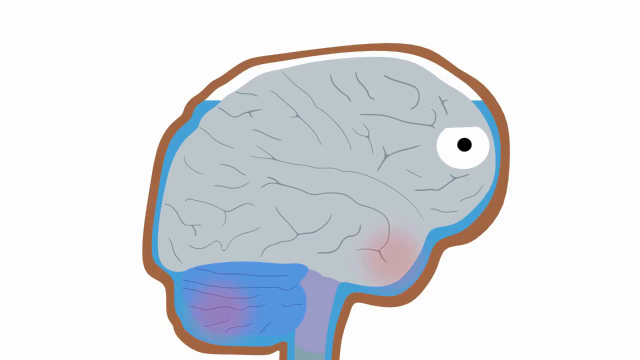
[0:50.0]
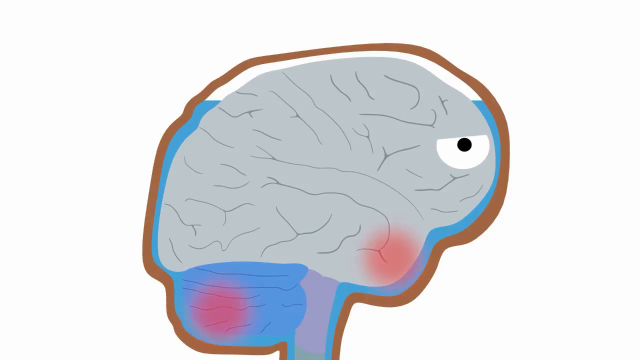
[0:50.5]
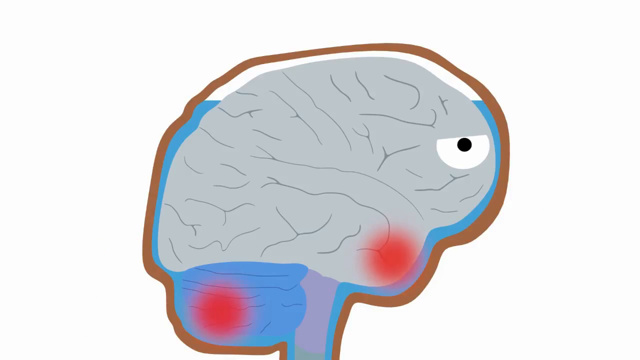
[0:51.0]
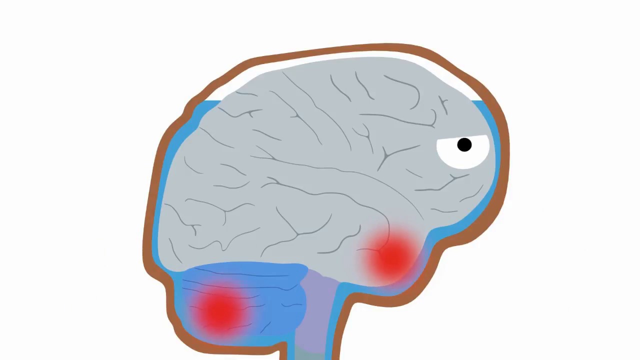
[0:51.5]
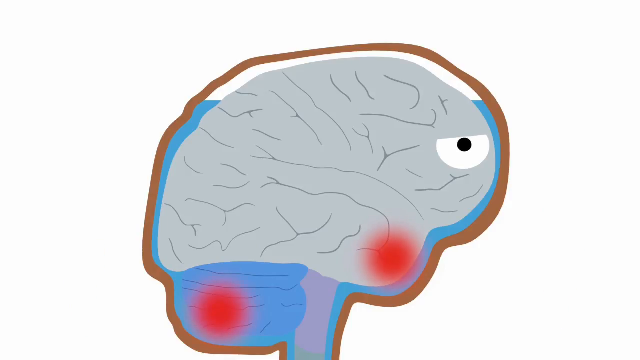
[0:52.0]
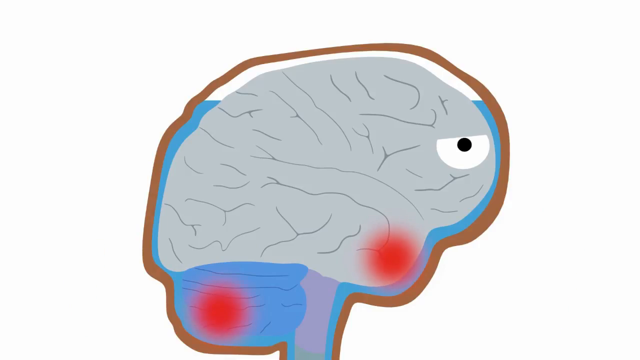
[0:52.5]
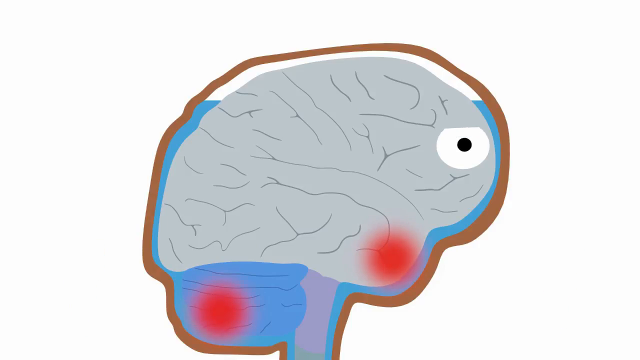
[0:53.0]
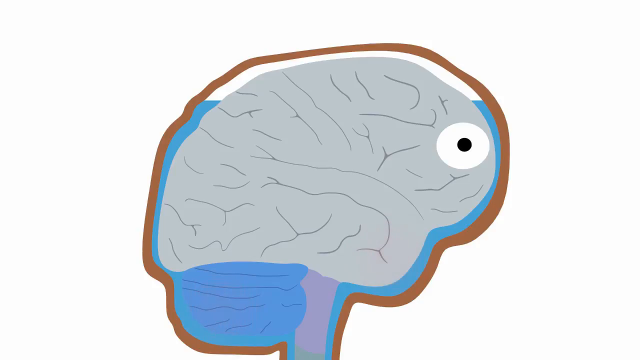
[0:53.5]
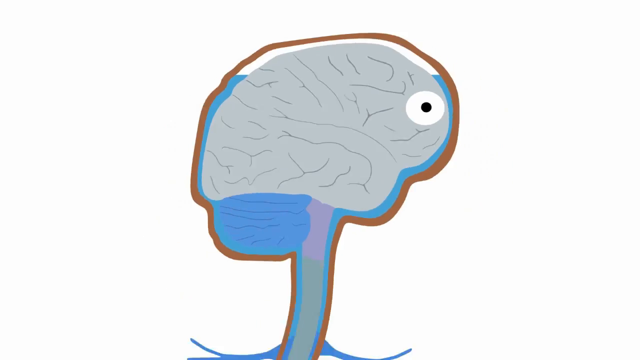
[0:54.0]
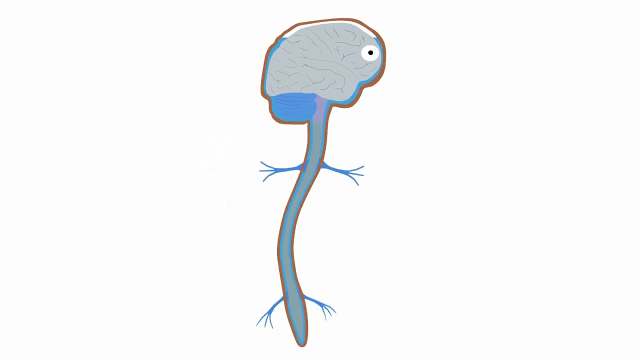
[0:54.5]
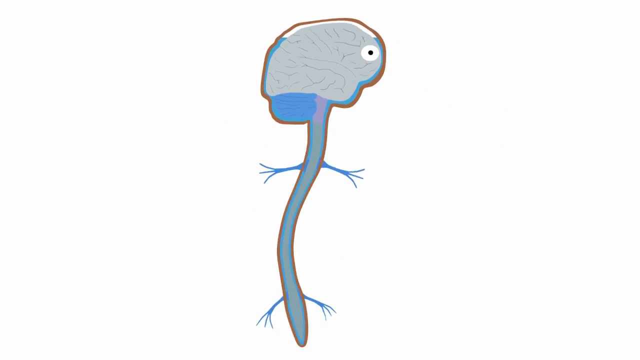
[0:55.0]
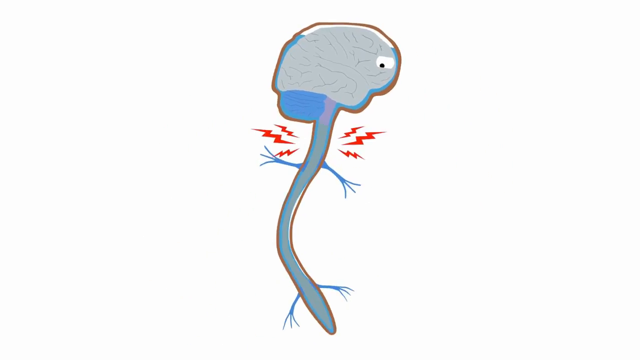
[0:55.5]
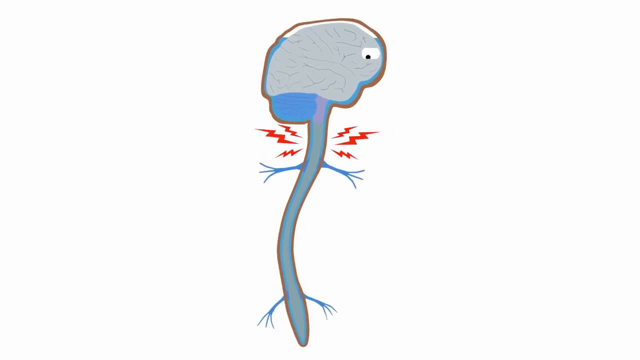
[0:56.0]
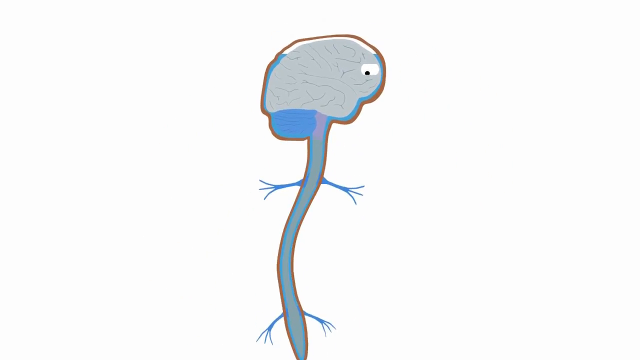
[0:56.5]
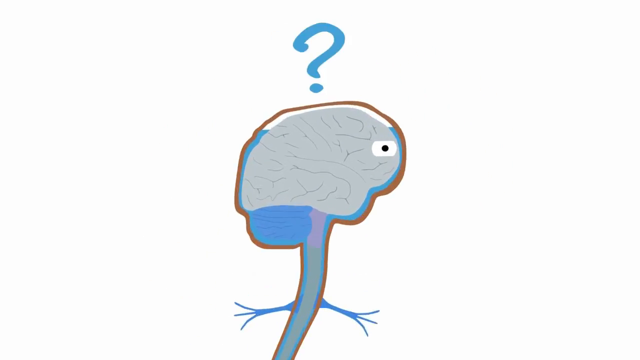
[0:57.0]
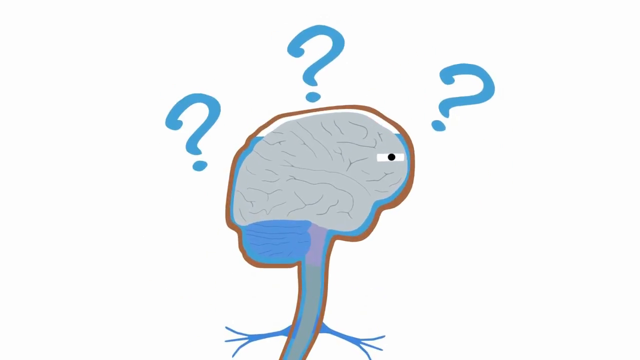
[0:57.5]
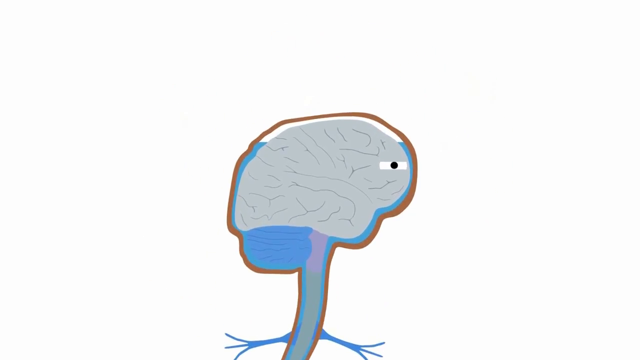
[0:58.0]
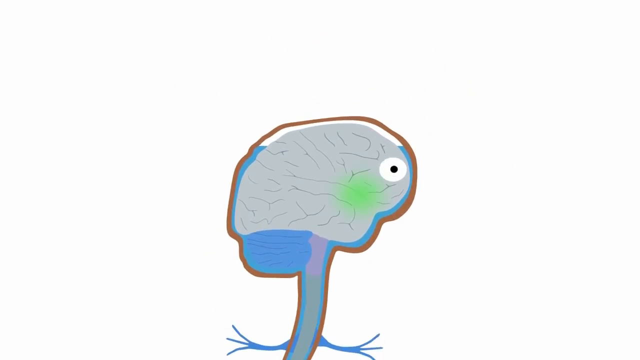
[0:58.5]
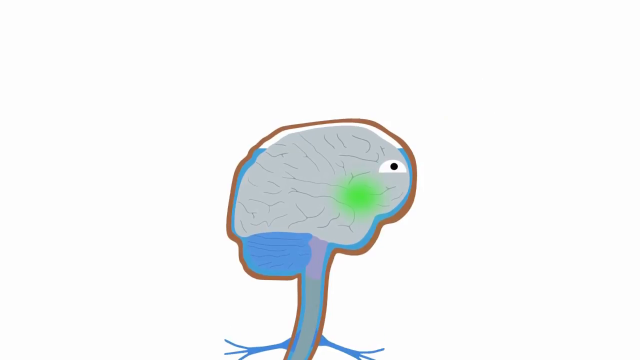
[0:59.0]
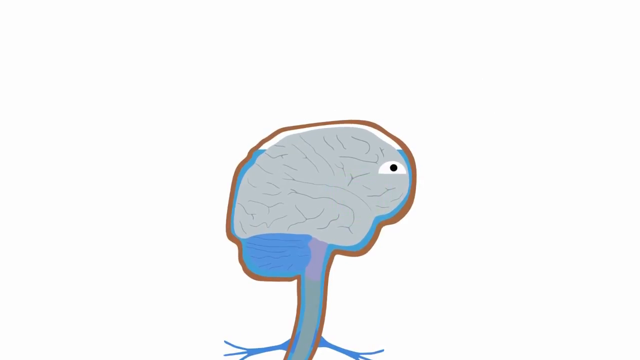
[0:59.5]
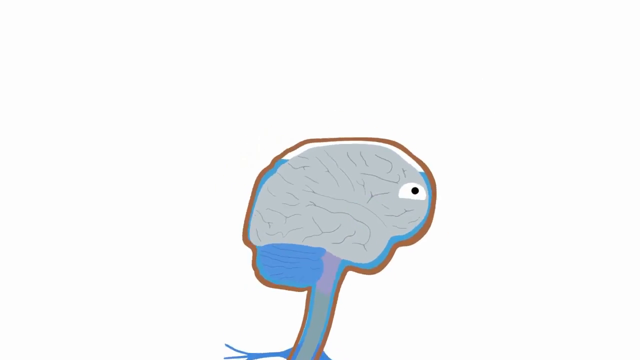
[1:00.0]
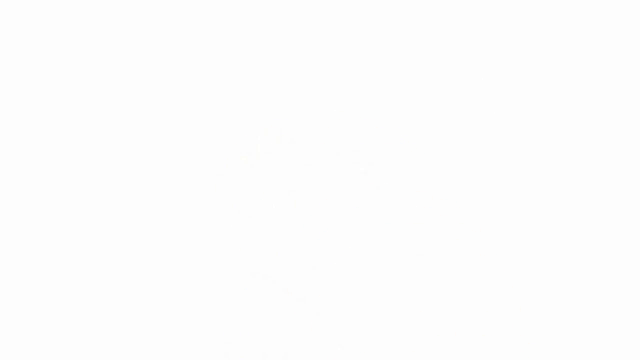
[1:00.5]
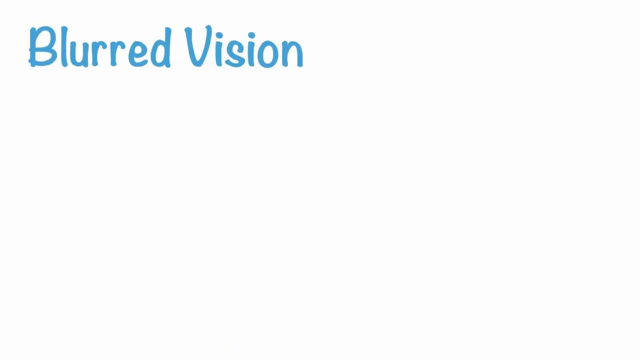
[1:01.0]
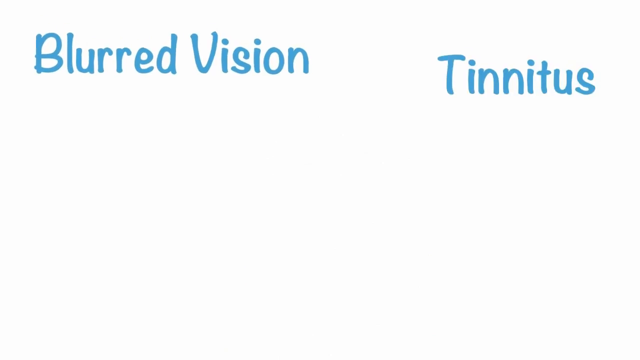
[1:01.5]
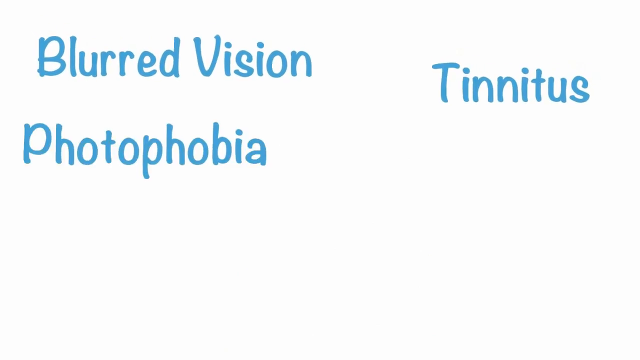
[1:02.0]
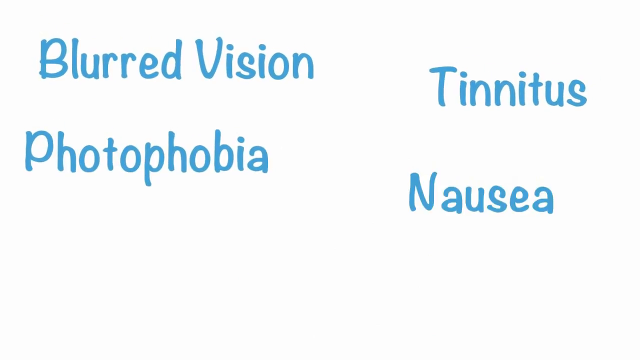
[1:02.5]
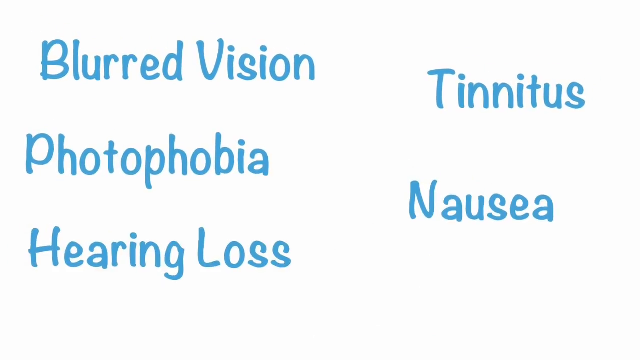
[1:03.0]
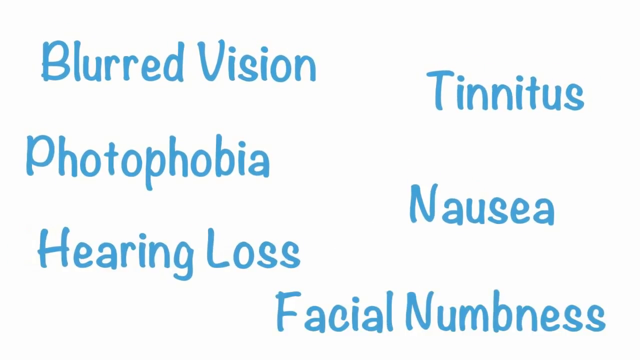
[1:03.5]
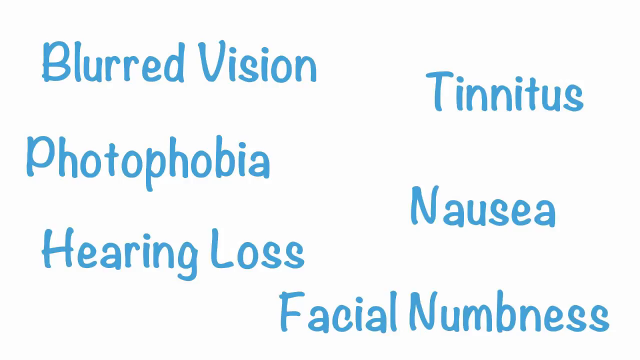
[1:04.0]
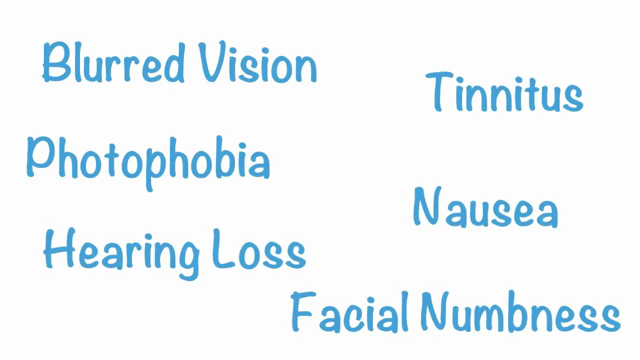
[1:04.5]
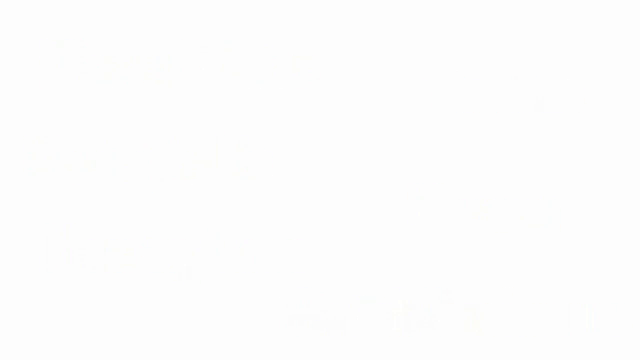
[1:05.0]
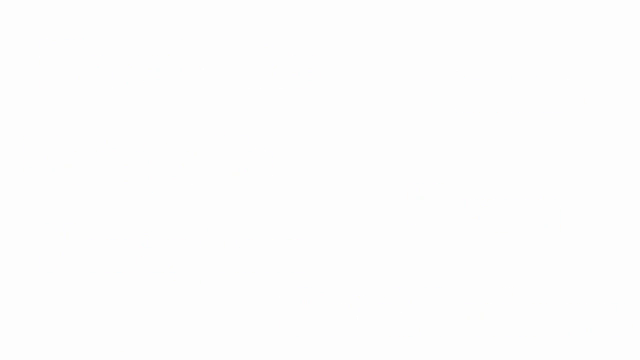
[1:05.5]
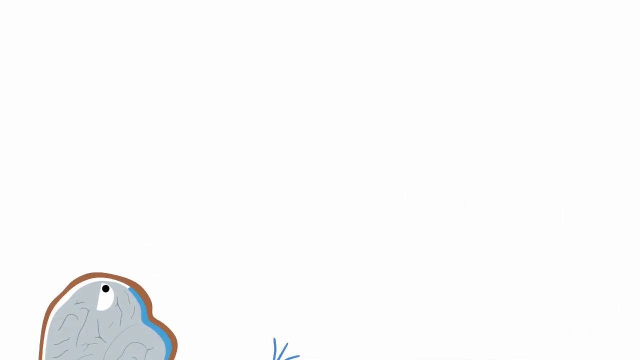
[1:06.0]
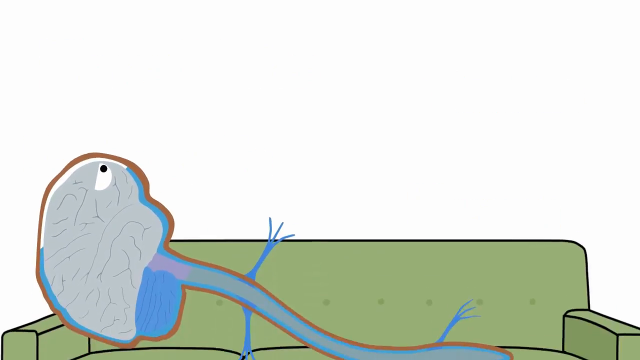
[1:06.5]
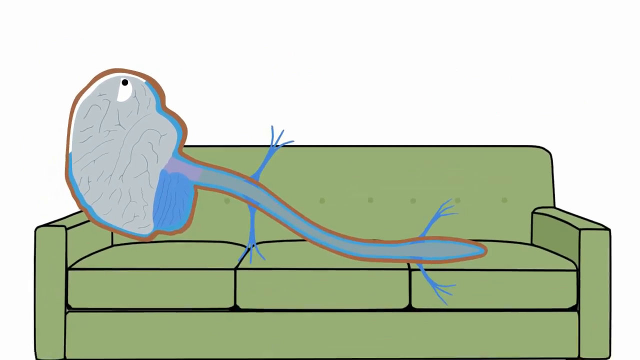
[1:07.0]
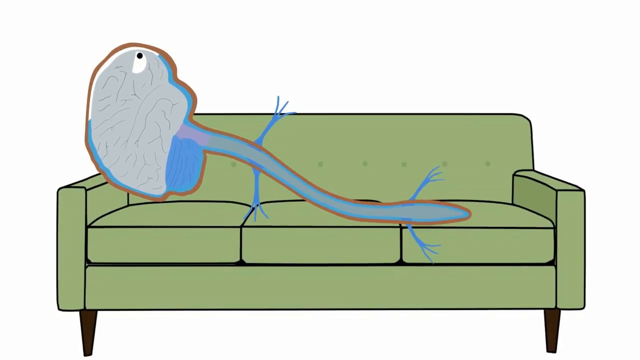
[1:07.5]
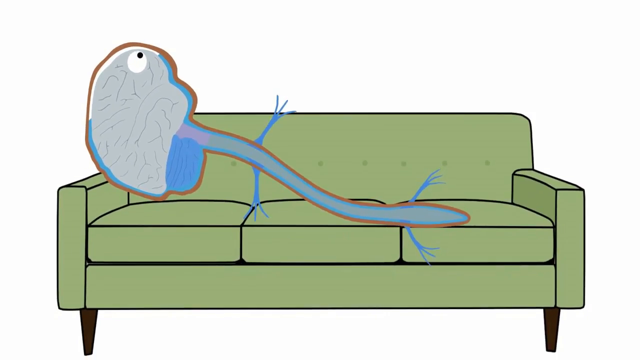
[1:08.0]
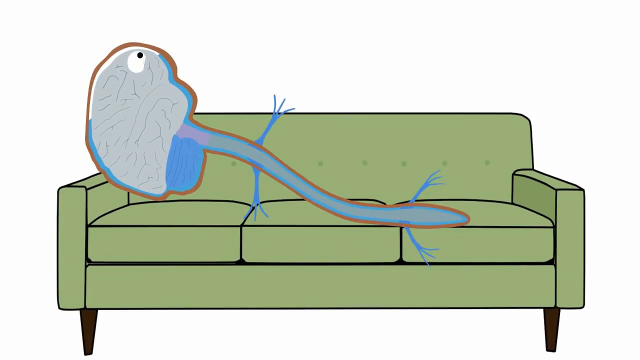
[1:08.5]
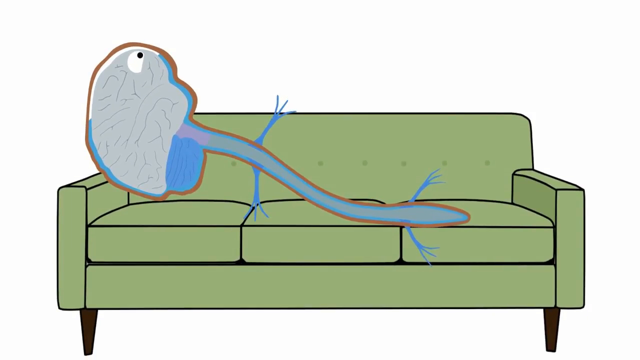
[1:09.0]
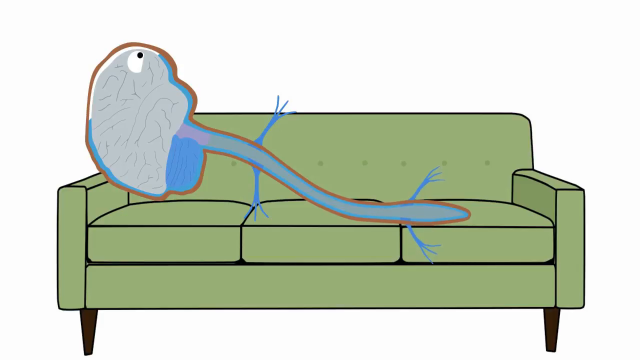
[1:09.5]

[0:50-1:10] The spot near the mouth gets darker, and the eye seems to close a little, as if a lid has gone down slightly. The spot disappears and the camera zooms out to show the whole spinal cord and the head, the spinal cord kind of swaying back and forth. Red lightning-bolt-like shapes, three on each side, appear near the top of the spinal cord, then disappear. The camera zooms in on the brain area, and three blue question marks appear around the brain. The eye continues to open and close, and a green spot appears kind of where the nose area would be. The brain then makes a falling motion and the whole graphic leaves the view. Blue text appears reading "blurred vision photophobia tinnitus nausea hearing loss facial numbness". Then there is a picture of a green couch, with the brain and spinal cord laying on it, moving just slightly.